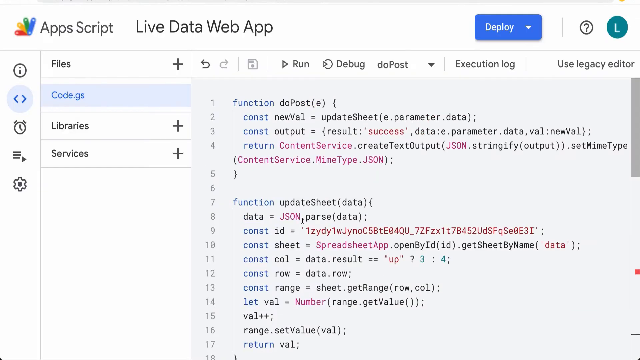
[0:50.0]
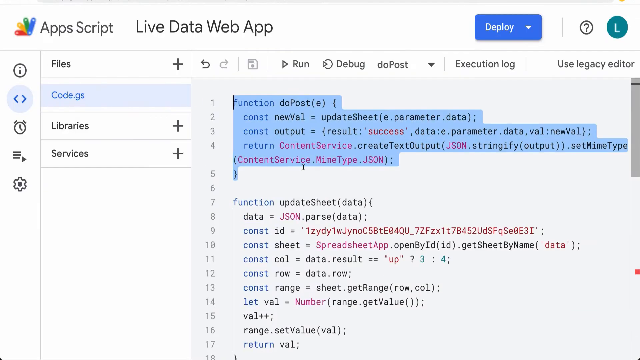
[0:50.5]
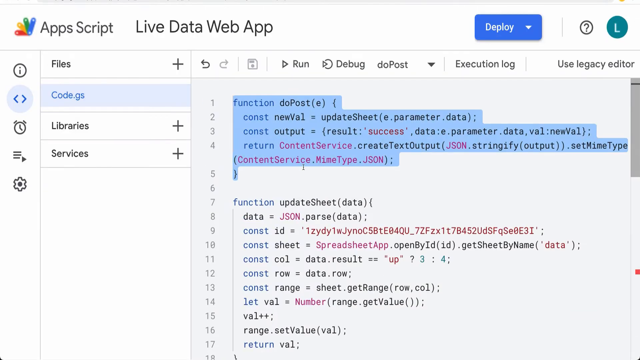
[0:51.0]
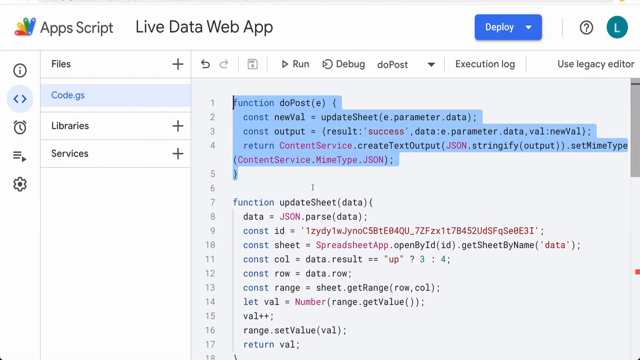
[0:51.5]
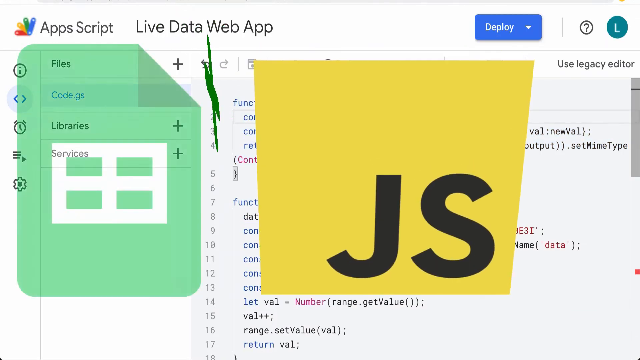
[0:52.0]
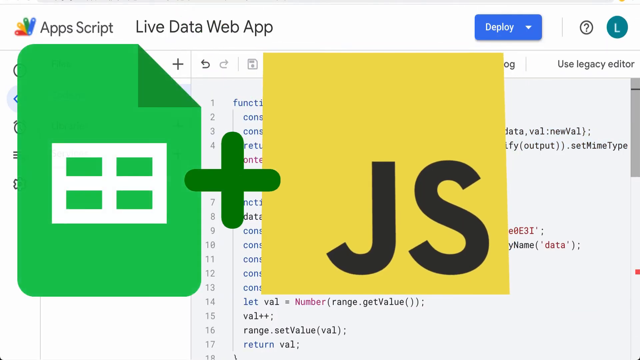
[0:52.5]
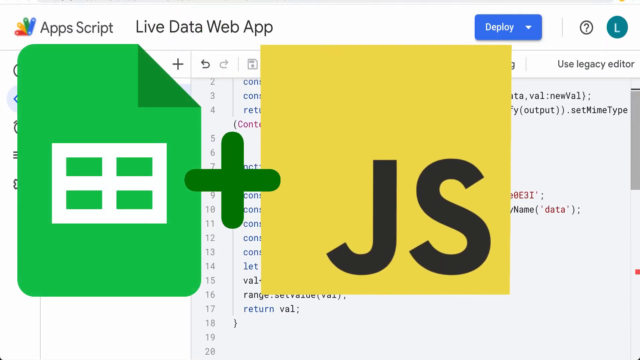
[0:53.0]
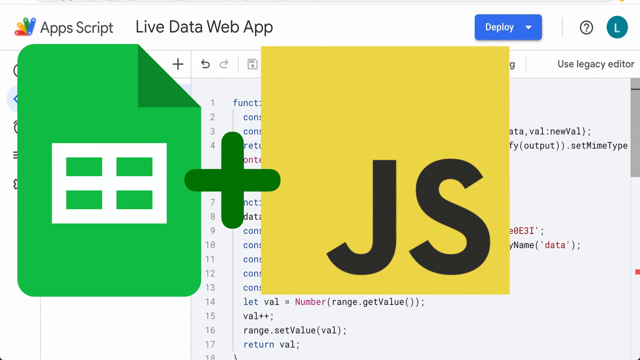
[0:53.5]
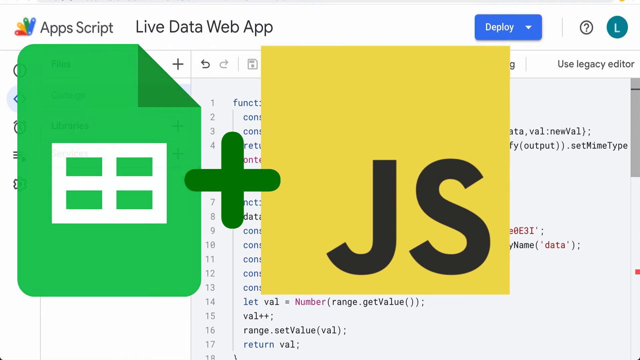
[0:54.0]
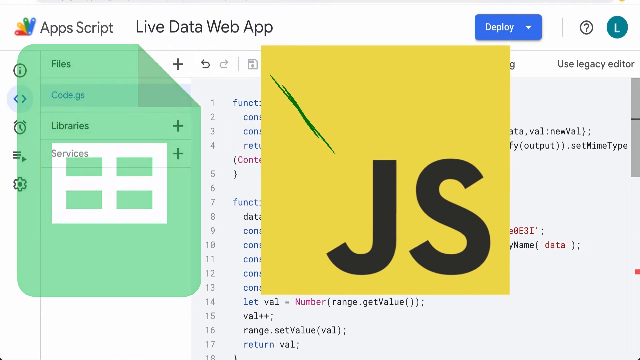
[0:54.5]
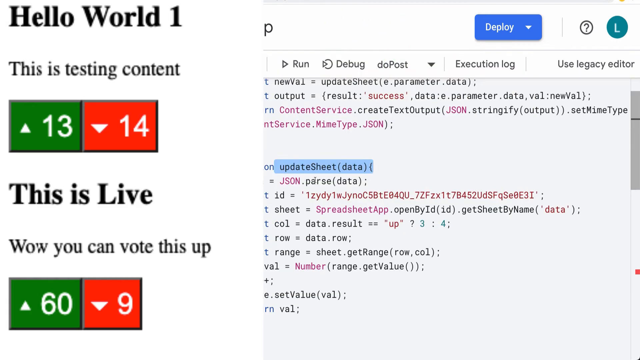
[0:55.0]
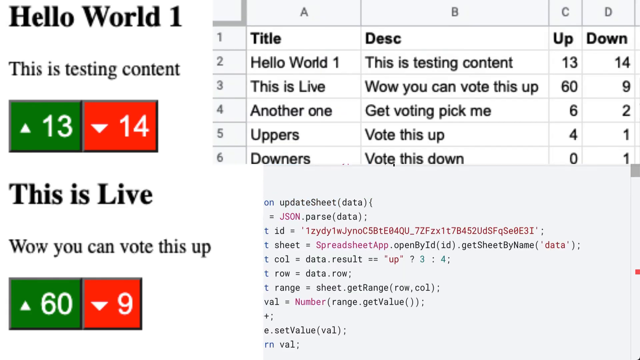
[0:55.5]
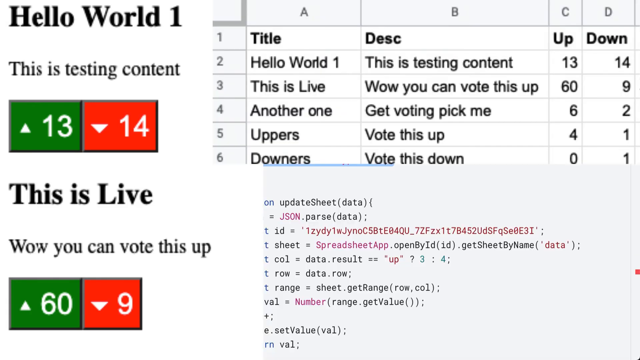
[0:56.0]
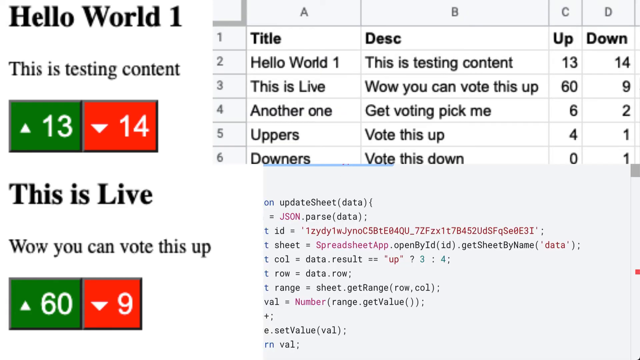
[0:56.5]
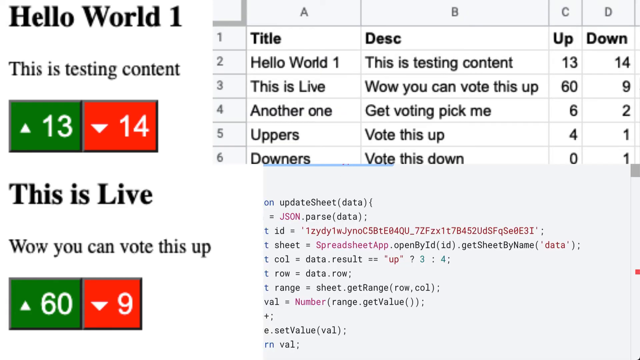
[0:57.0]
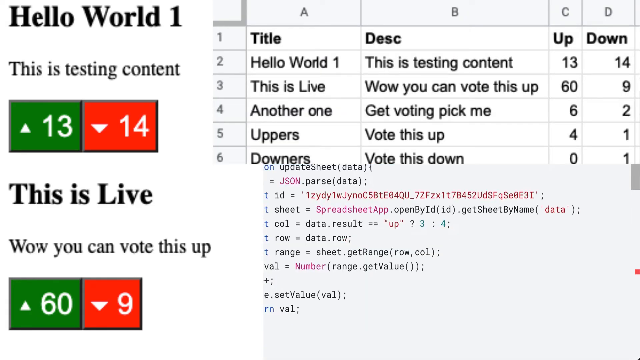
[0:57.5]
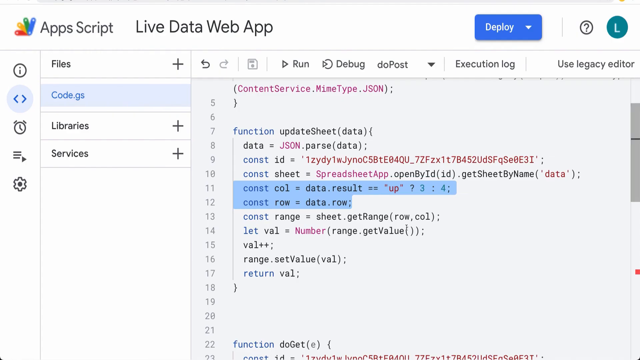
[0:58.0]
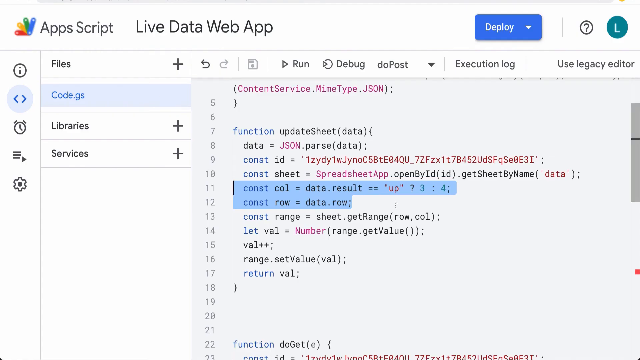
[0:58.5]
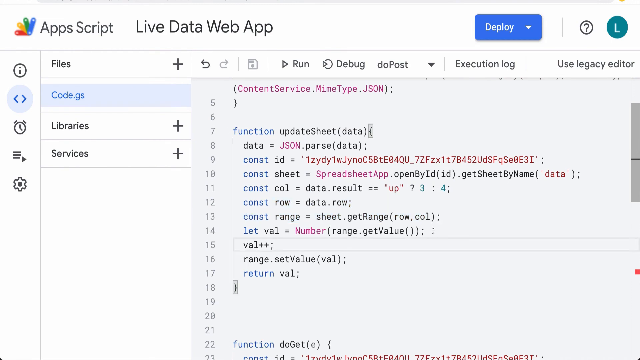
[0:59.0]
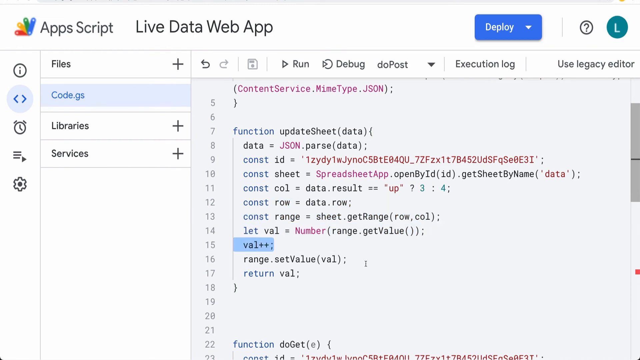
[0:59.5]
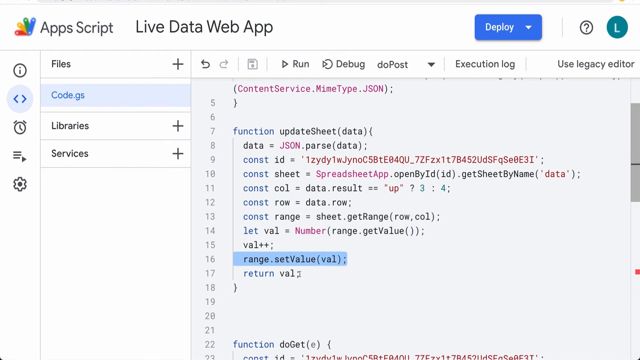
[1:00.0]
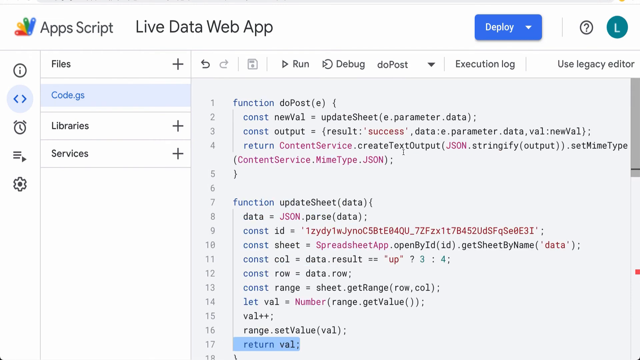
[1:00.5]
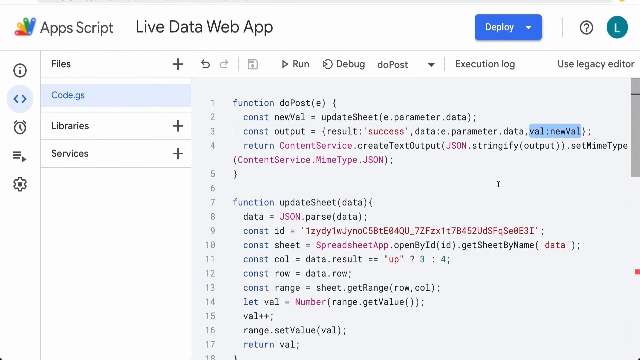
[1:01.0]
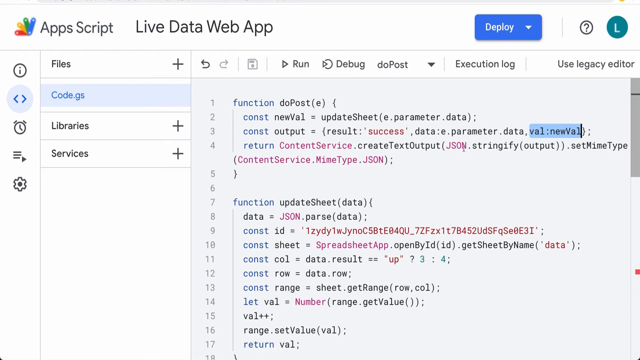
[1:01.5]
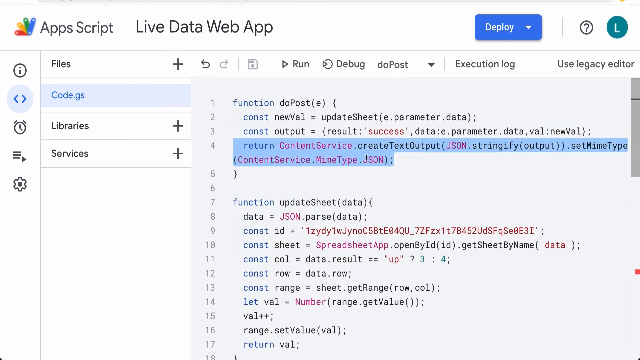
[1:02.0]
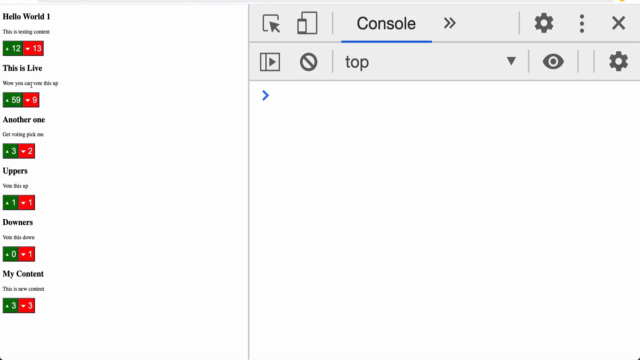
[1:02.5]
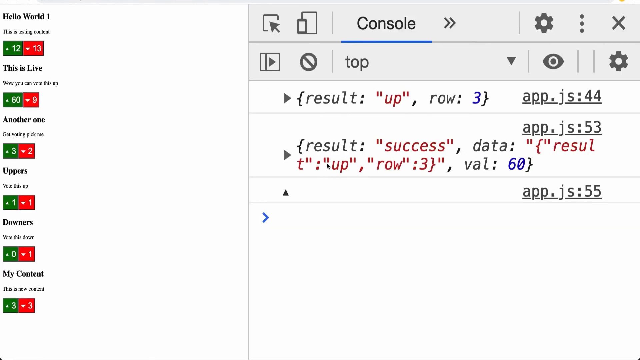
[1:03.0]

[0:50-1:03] The page has live data web application written on it, along with JS. The numbers 13 and 14 are on the left side, and javascript.js appears. There is a theme setting, a button for displaying, and libraries and services written on the page.